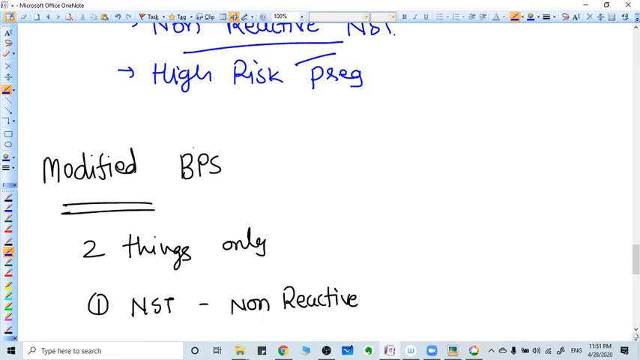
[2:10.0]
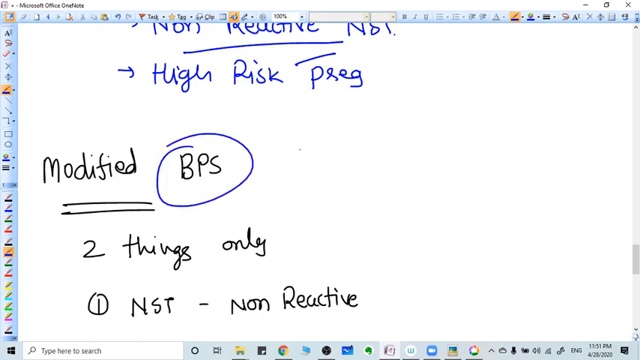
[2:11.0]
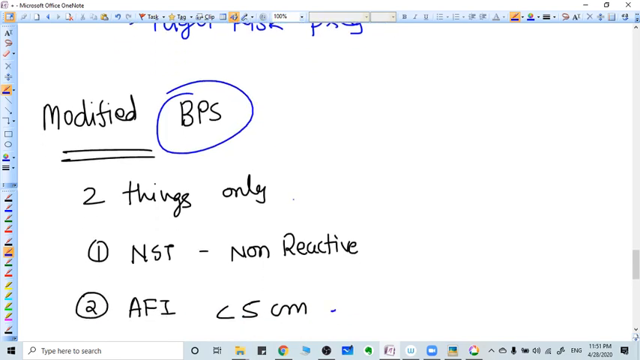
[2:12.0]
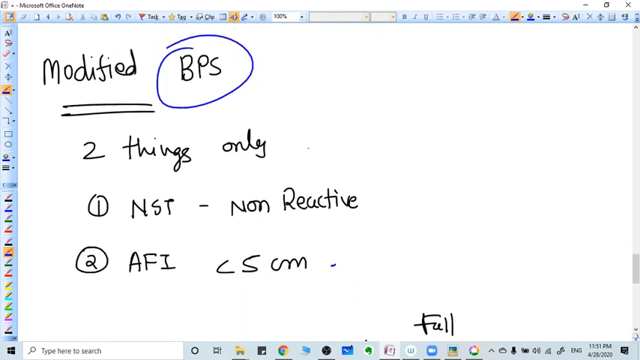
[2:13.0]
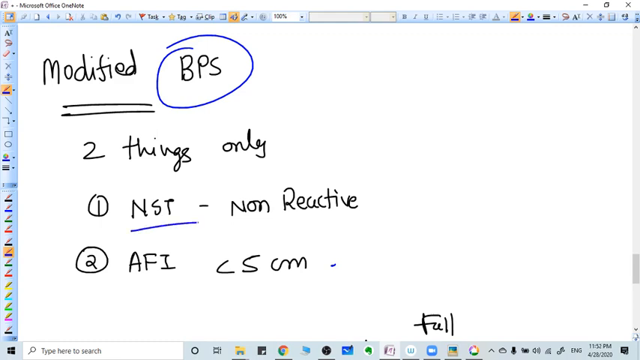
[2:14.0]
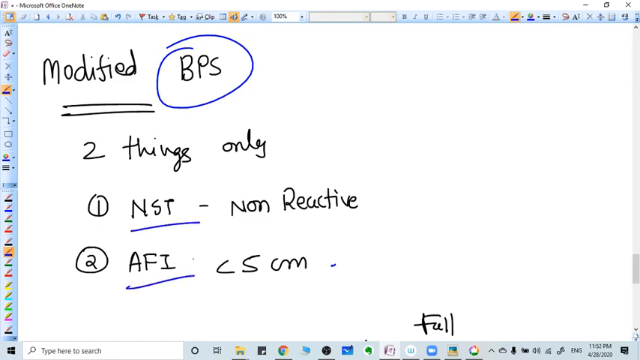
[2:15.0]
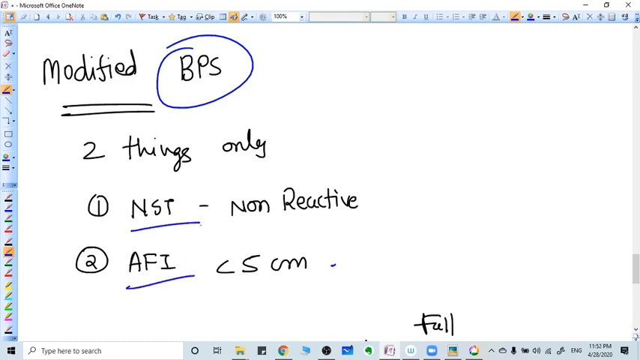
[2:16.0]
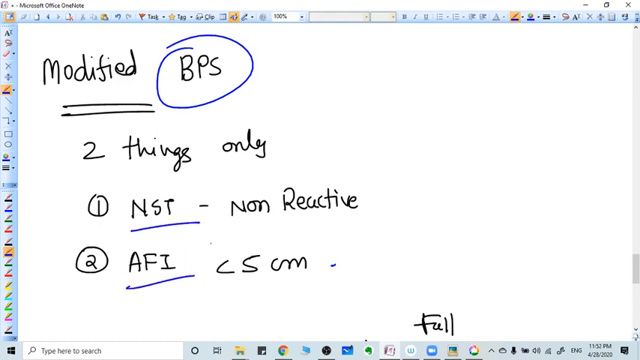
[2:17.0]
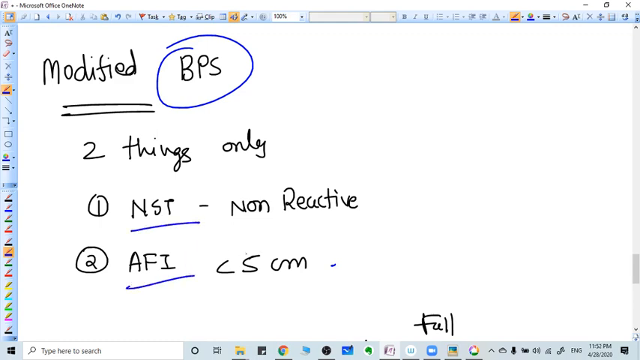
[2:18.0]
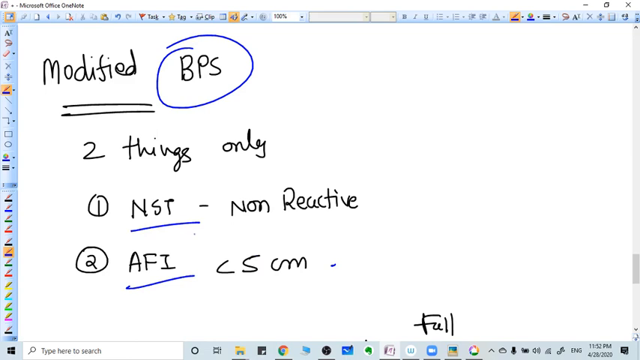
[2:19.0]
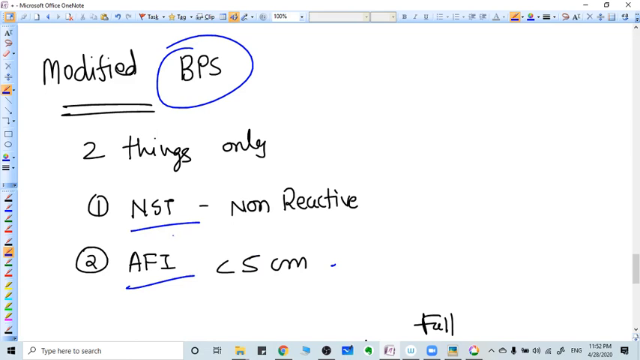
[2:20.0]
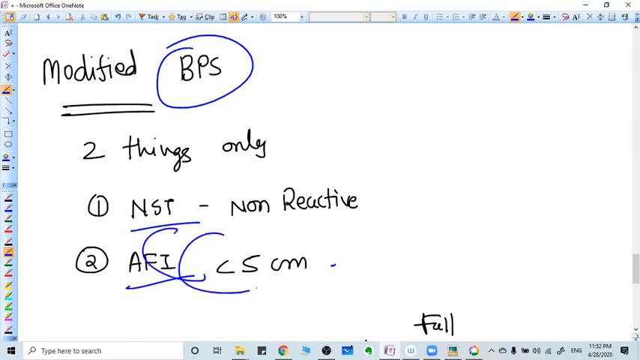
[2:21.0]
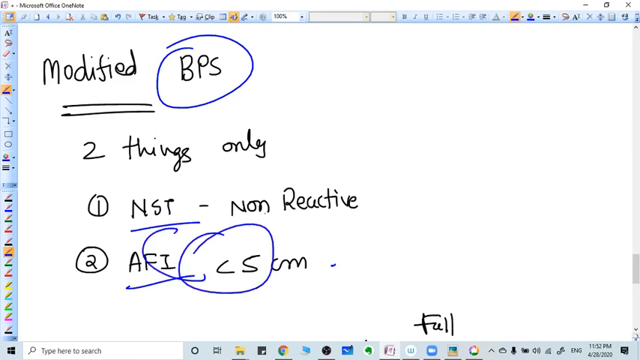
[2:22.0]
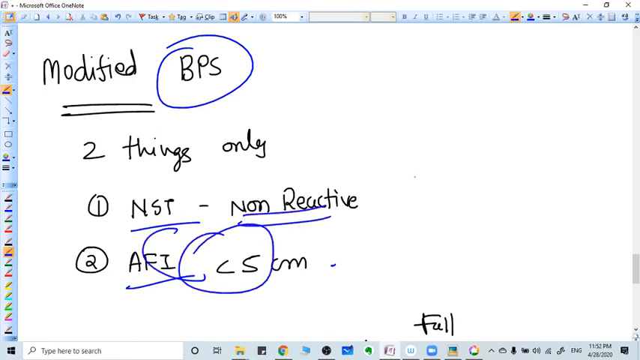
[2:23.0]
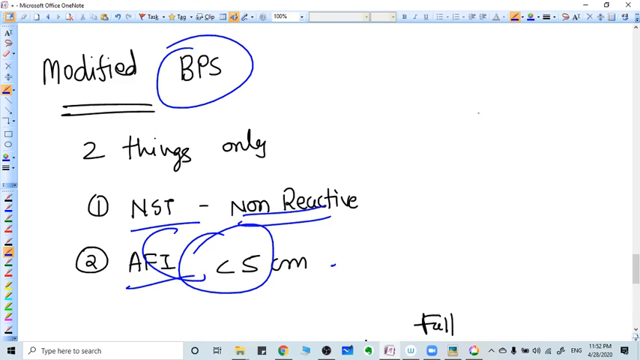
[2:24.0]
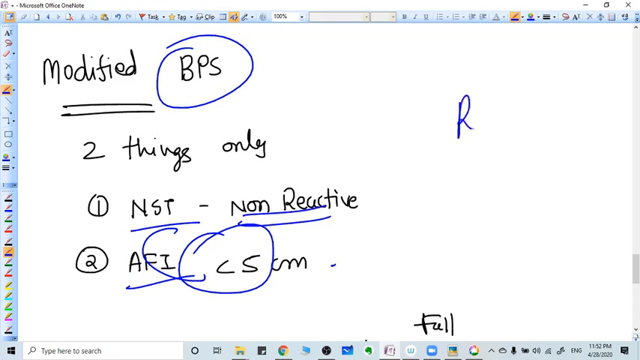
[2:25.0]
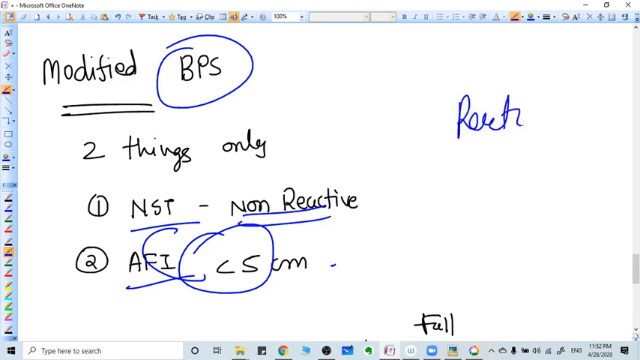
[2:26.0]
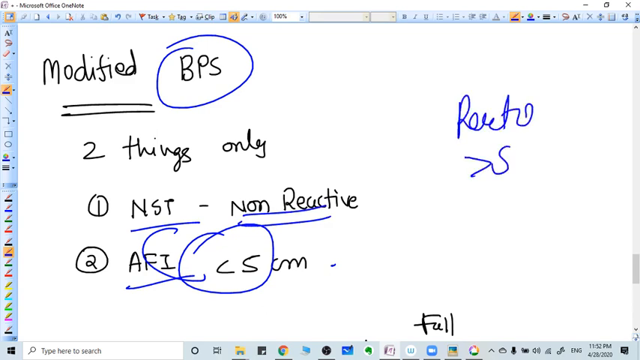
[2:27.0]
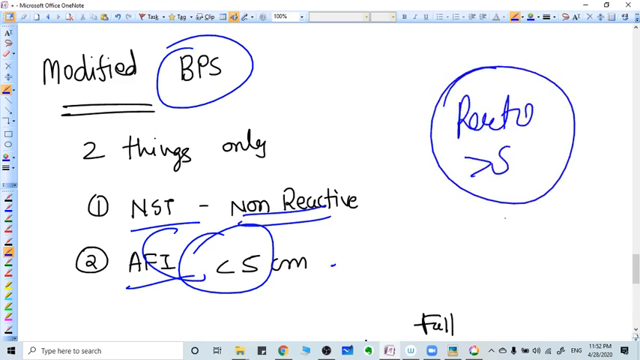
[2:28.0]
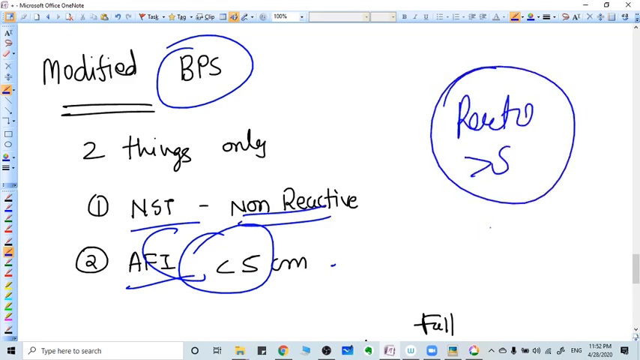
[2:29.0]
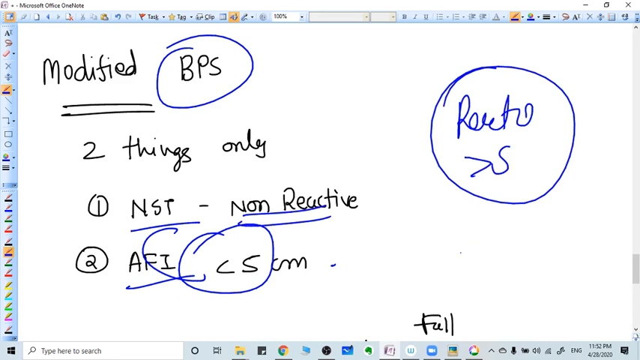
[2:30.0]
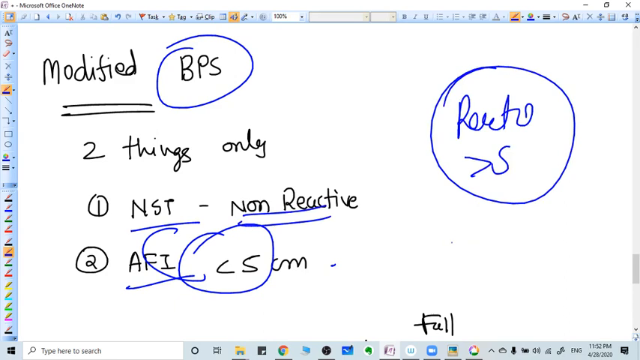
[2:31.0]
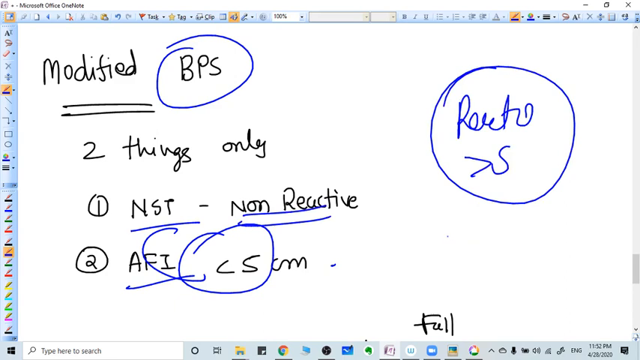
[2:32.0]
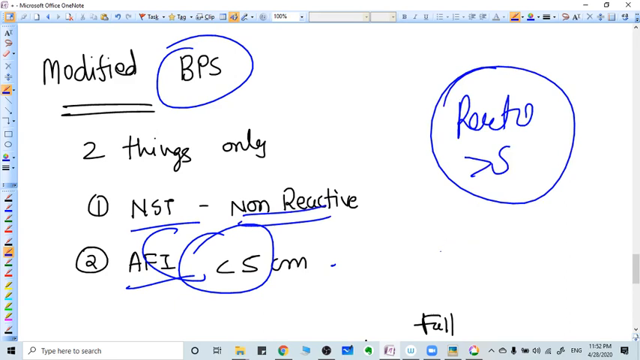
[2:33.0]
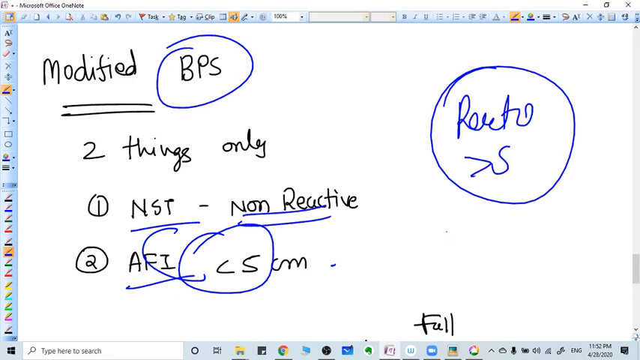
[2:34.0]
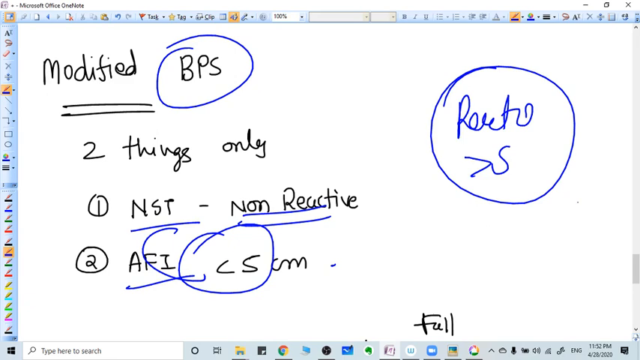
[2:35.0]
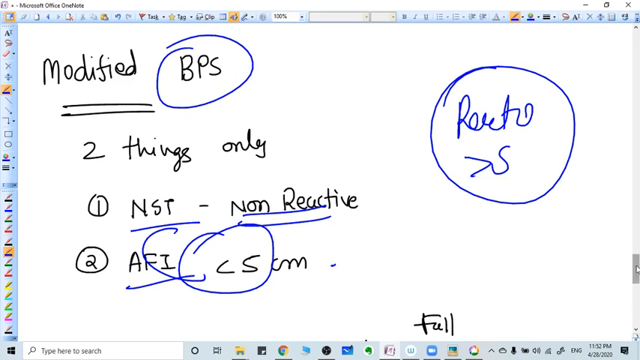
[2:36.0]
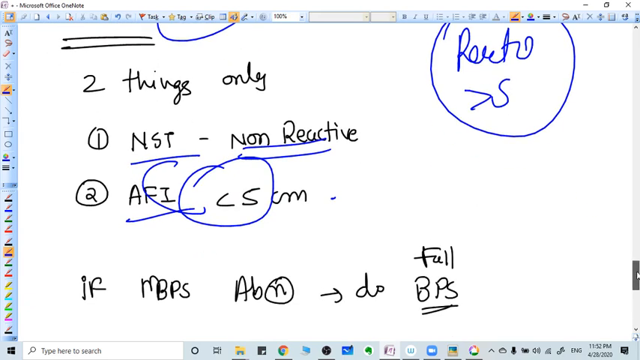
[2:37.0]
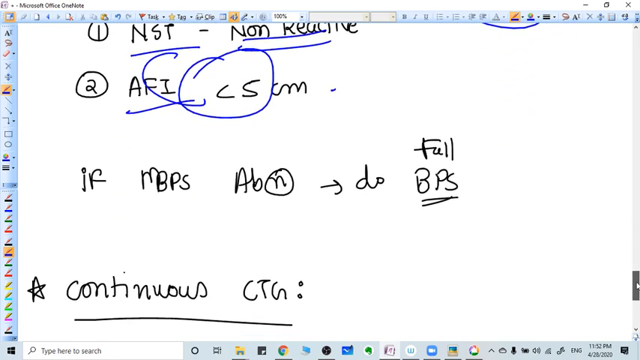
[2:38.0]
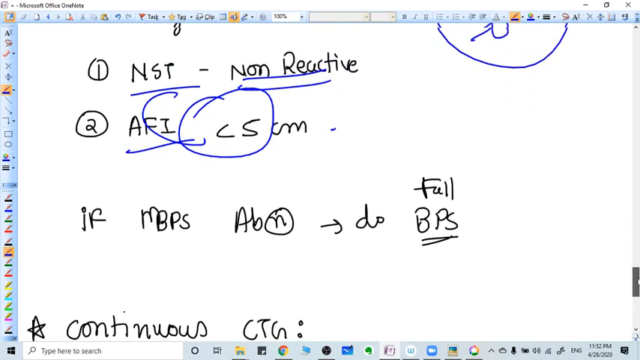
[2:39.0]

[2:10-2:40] The view is focused on "modified BPS," written in black. The cursor circles the "BPS" part in blue. The page scrolls down a little, and the NST and then the AFI are underlined in blue. The cursor scrolls down to "AFI" and "CS"; "non-reactive" is underlined in blue and the CS in the second line is circled. At the bottom of the note, in black, it says "full." The person then uses the cursor to write in the top right corner something that looks like "retro" with a greater-than sign and then an S, and circles it in blue. The cursor moves down toward the word "full" and then over to the scroll bar. More words now appear, with a star, saying "continuous CTA."